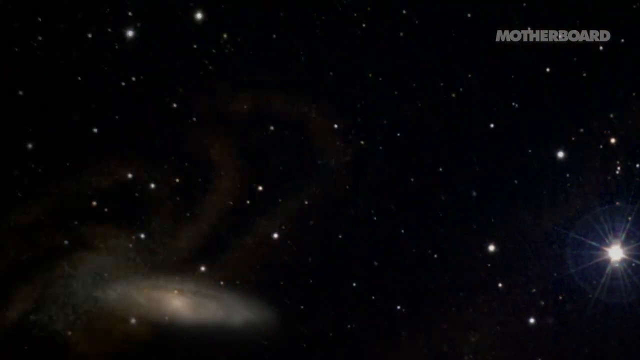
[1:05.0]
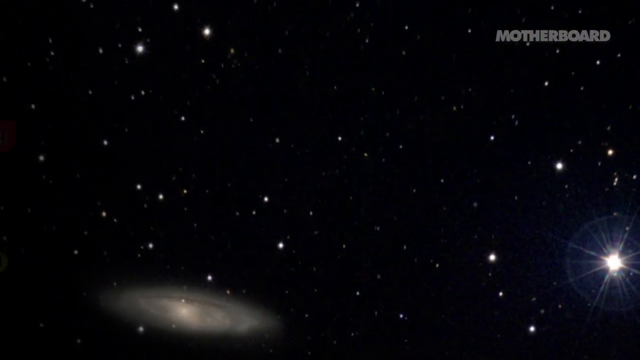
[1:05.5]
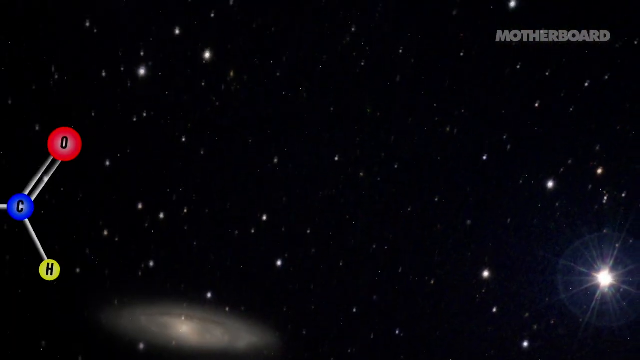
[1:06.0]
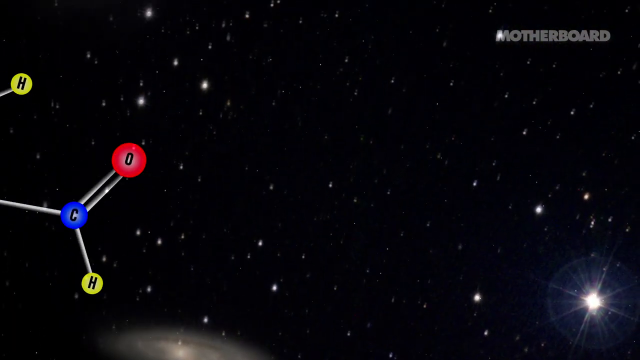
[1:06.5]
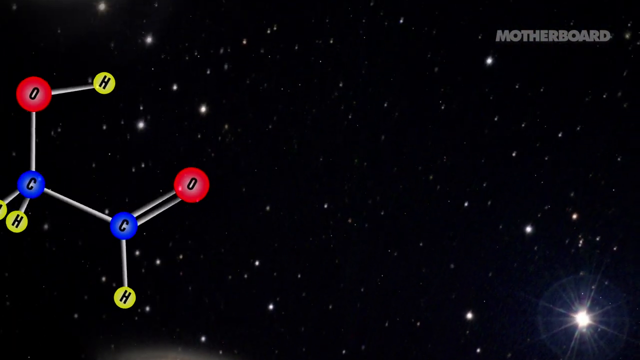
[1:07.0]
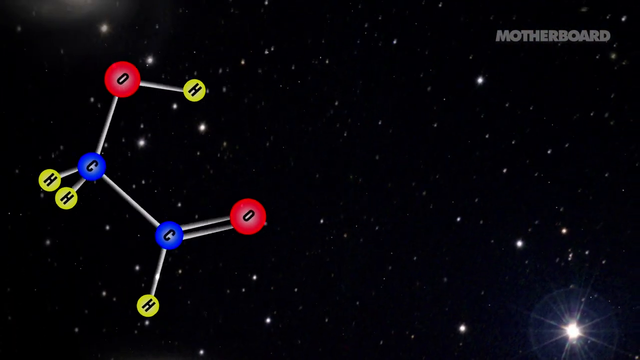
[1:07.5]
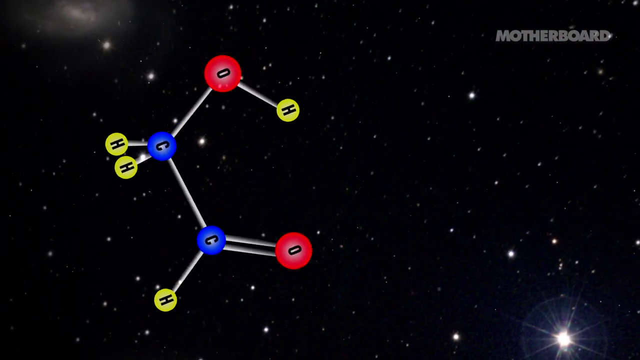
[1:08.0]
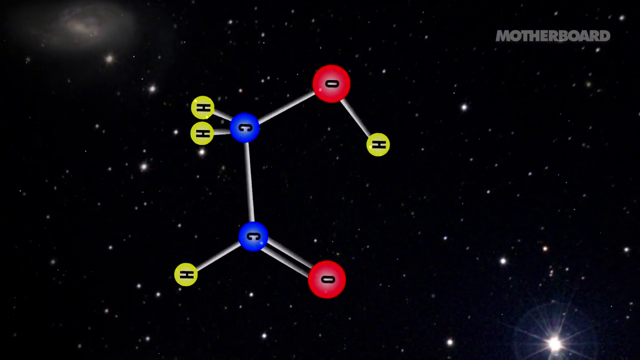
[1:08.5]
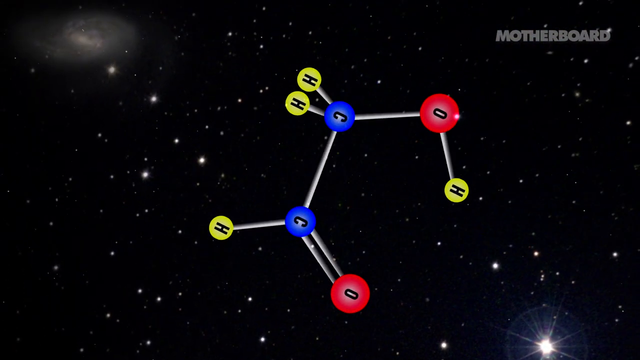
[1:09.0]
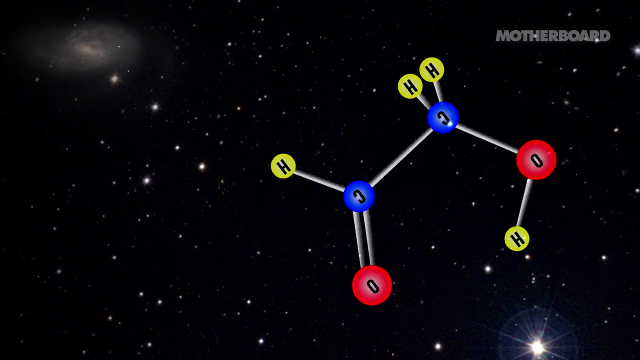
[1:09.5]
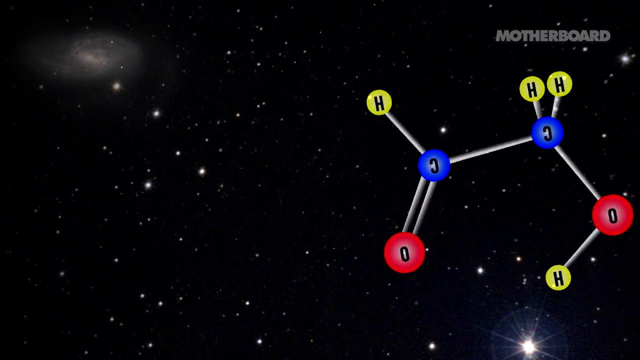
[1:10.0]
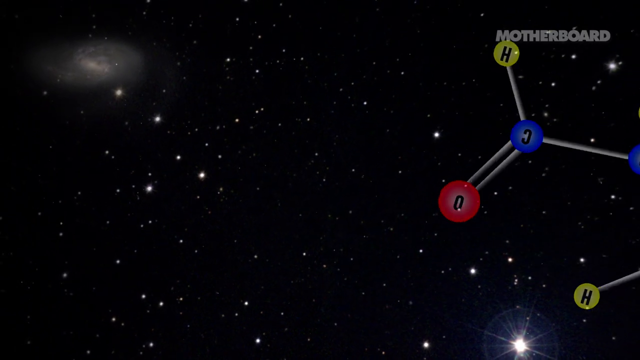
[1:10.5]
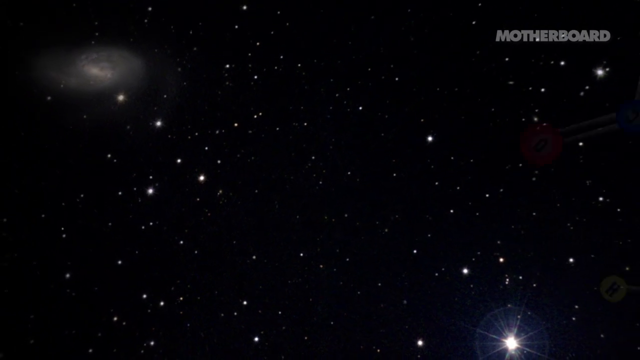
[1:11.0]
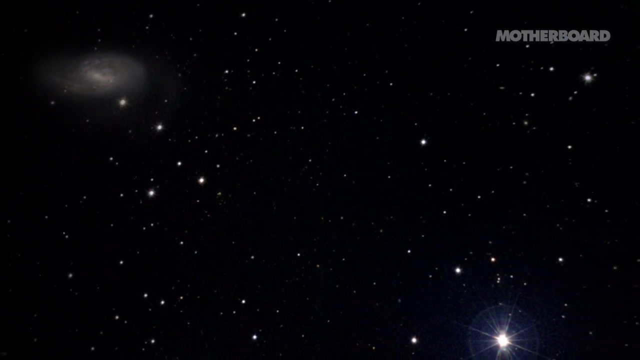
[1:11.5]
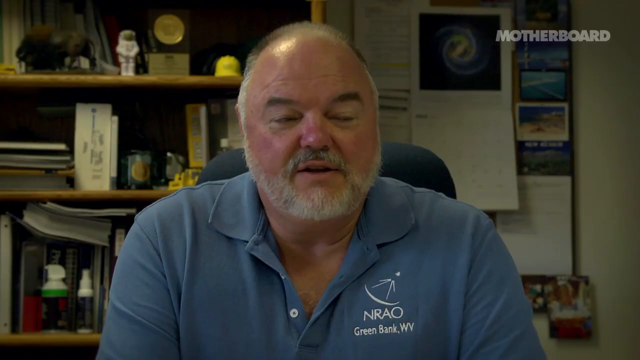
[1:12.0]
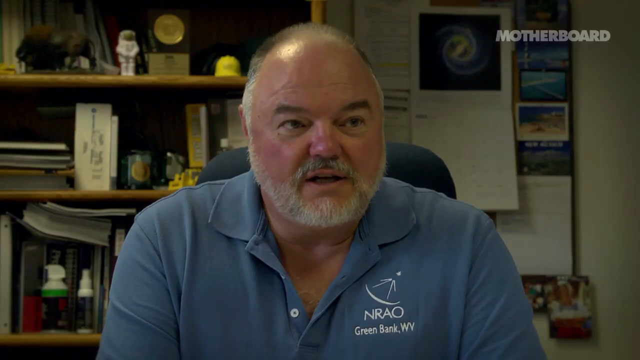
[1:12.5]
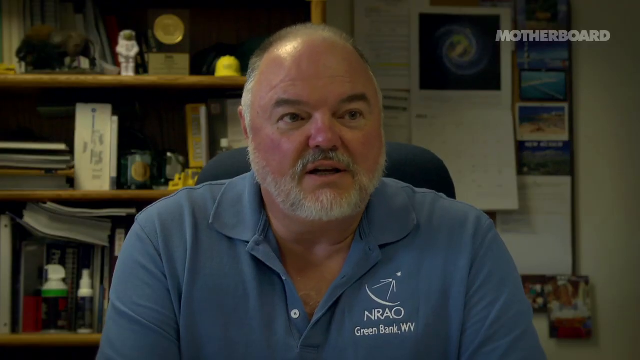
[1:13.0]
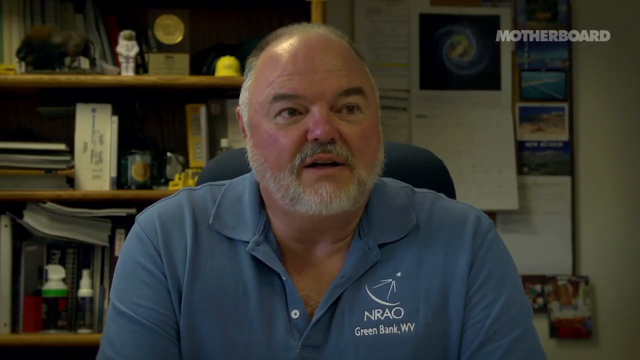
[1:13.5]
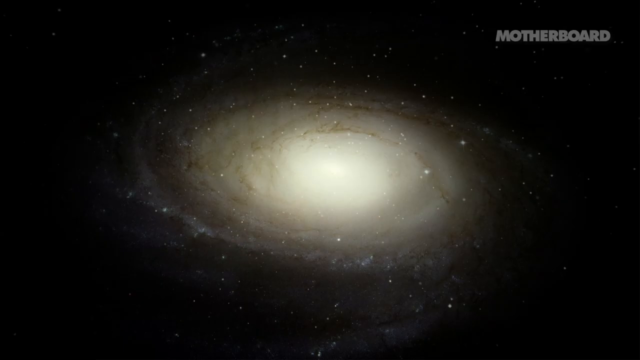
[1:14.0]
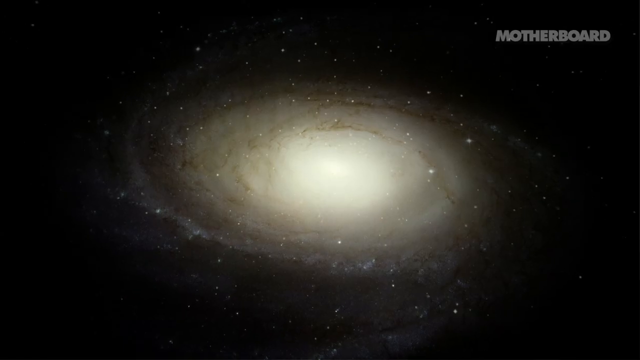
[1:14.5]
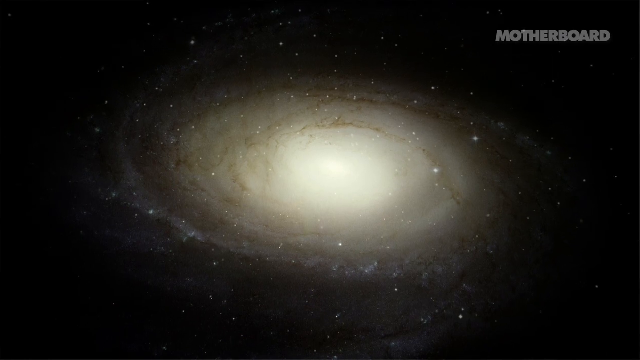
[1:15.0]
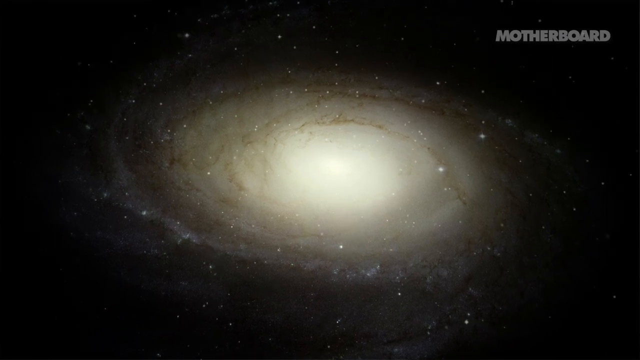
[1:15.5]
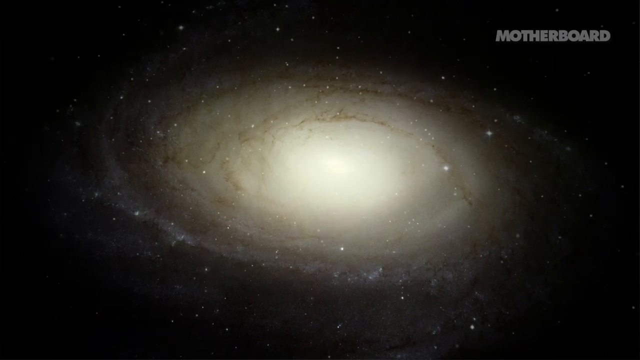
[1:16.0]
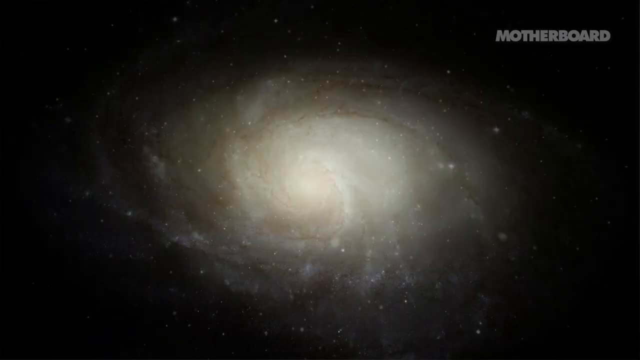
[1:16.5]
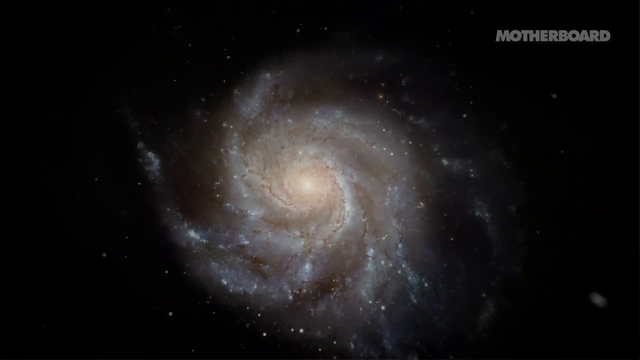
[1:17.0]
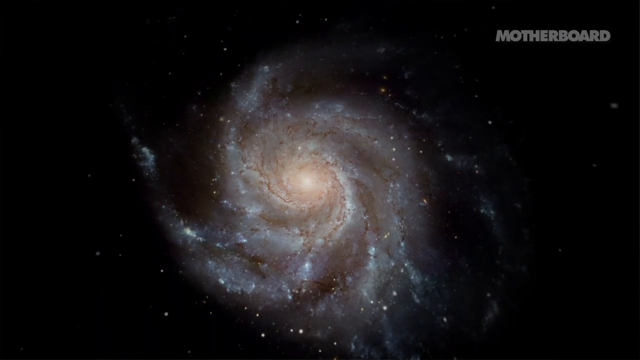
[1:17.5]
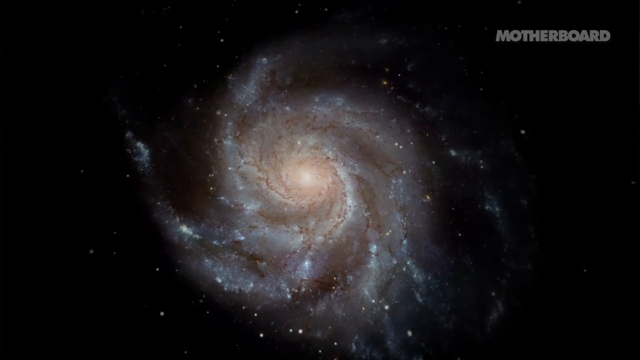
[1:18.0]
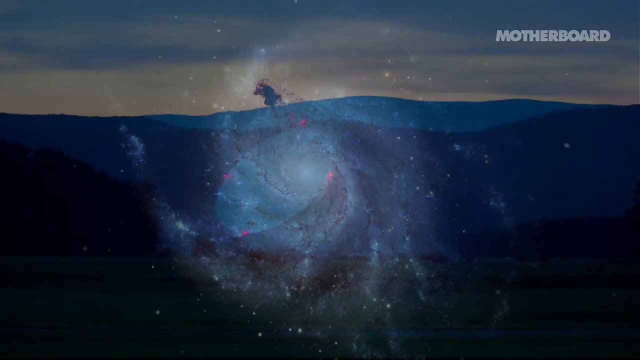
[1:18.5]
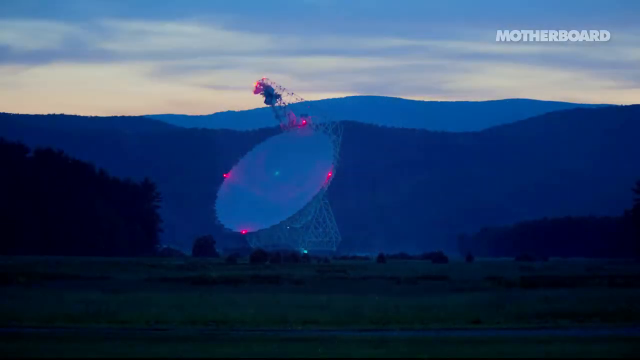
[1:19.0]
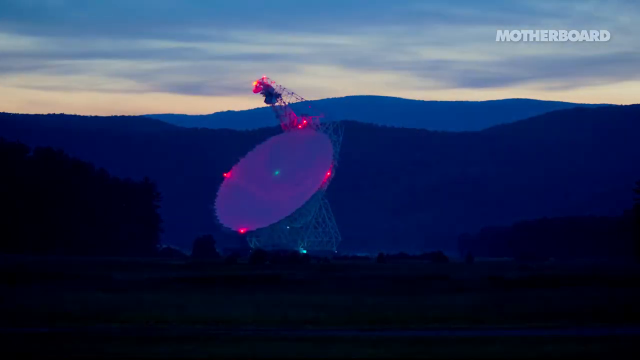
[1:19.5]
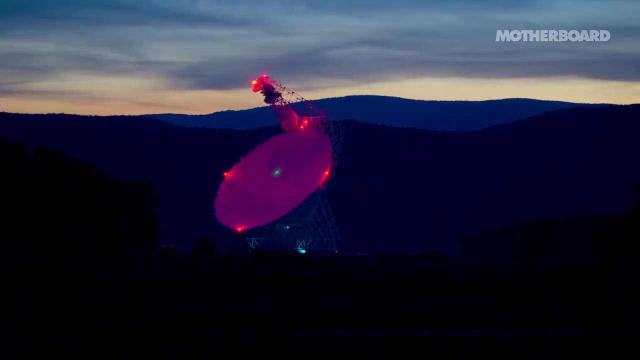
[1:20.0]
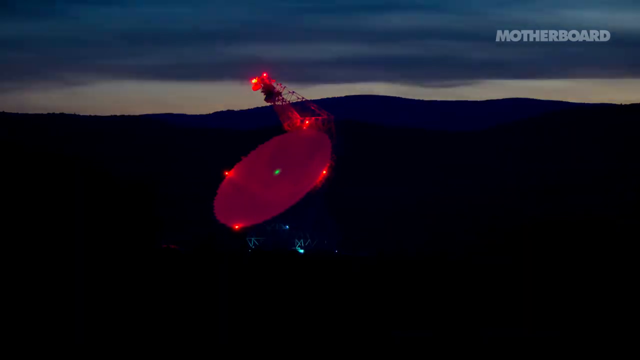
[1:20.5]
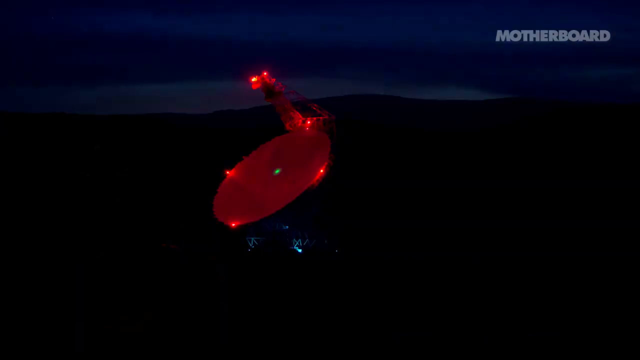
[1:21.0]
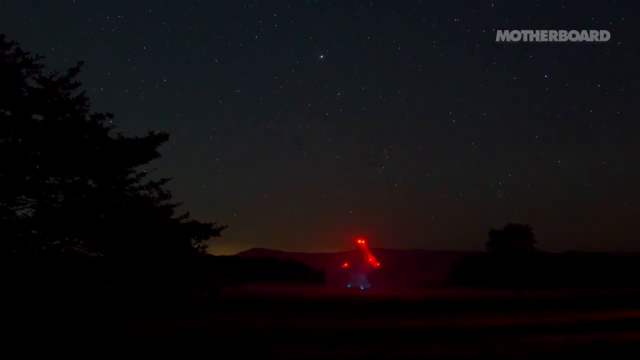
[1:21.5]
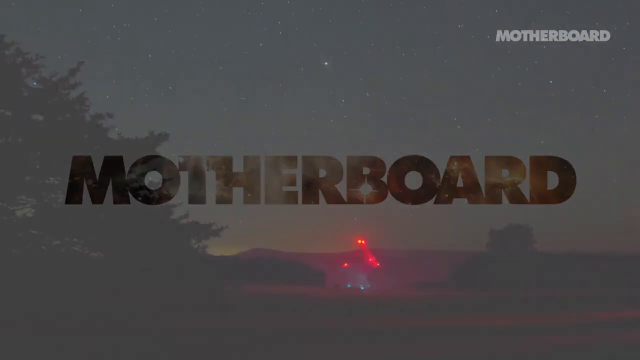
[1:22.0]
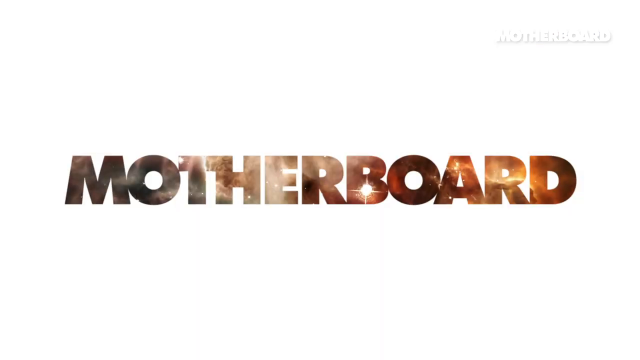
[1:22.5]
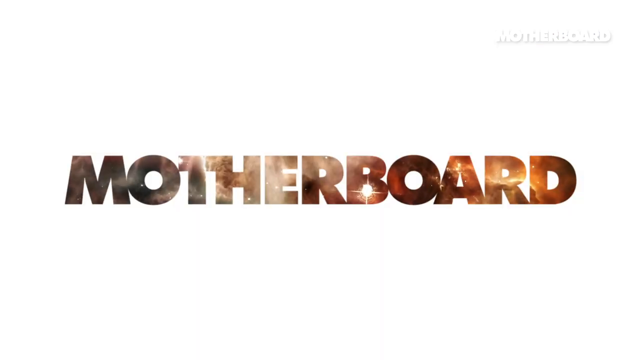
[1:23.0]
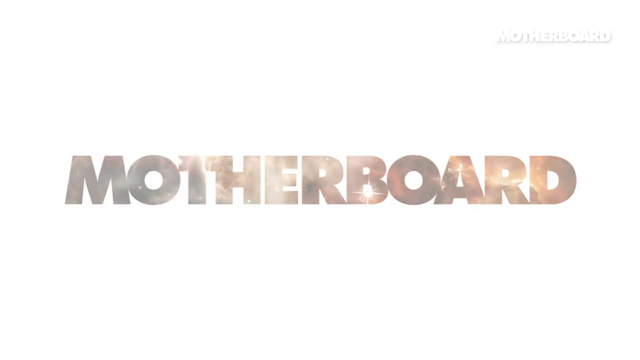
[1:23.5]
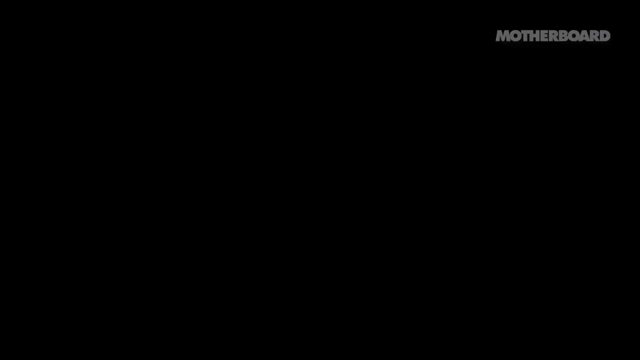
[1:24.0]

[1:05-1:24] What looks like a large chemical structure with red and blue circles floats across the front of the screen against a dark space background. Next, a man in an office, wearing a pale blue polo neck t-shirt, says some words; he is bald with a short gray beard. After the man, what looks like a large swirling Milky Way galaxy appears, followed by what looks like stars. The word "motherboard" is written in the upper right corner, and text across the screen reads "motherboard minute the biggest telescope." Finally, the word "MOTHERBOARD" appears in bold gold capital letters, ending the video.